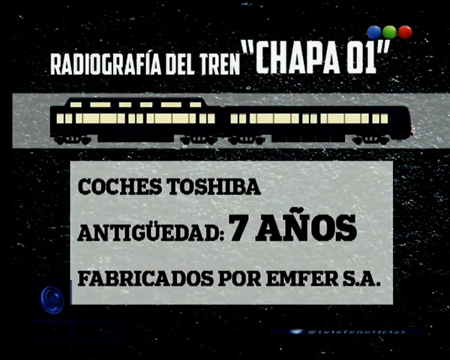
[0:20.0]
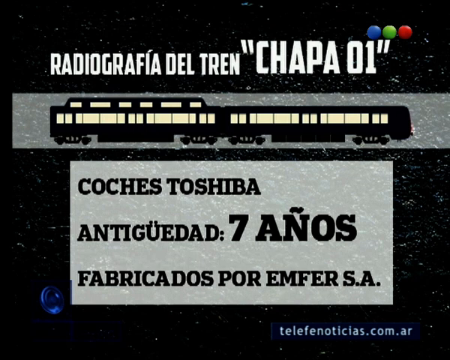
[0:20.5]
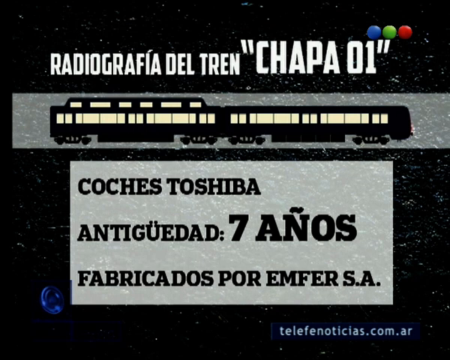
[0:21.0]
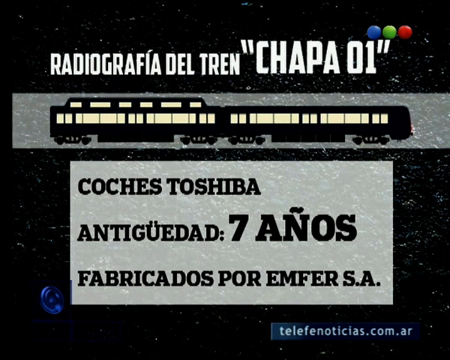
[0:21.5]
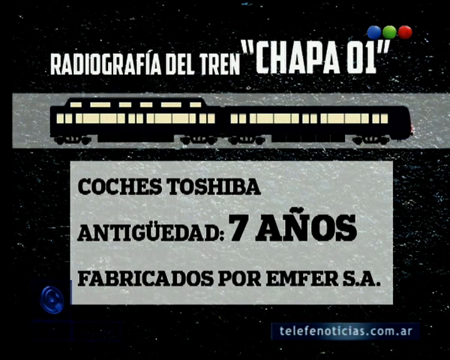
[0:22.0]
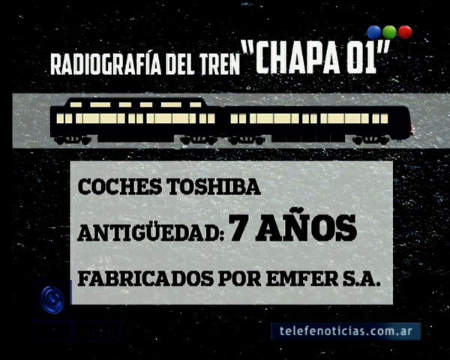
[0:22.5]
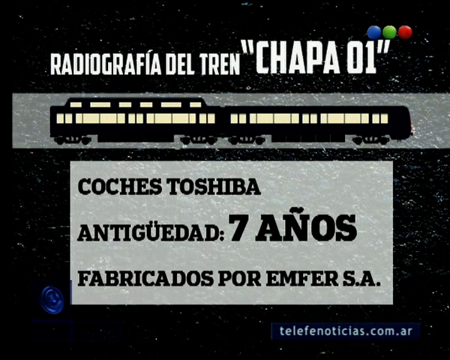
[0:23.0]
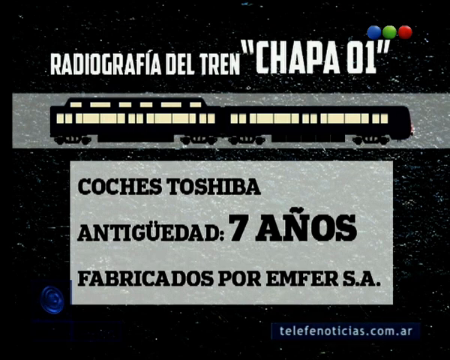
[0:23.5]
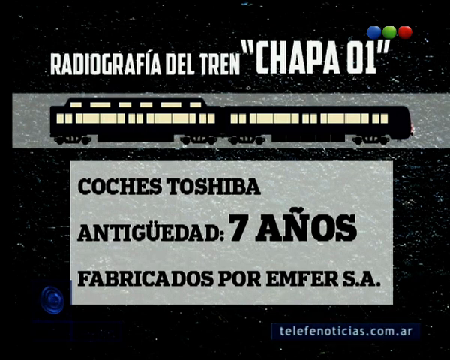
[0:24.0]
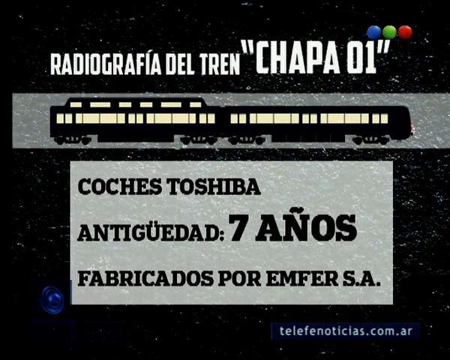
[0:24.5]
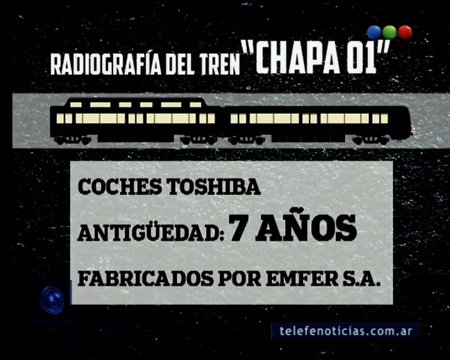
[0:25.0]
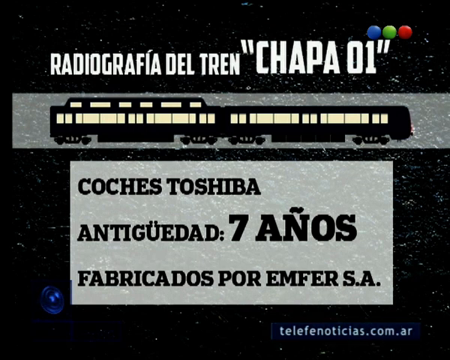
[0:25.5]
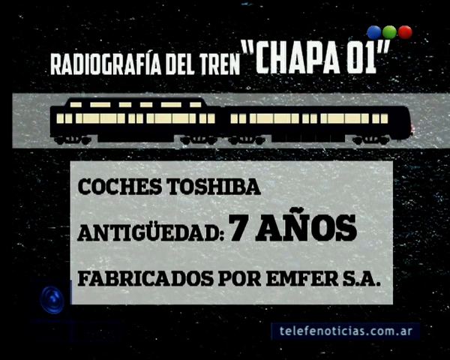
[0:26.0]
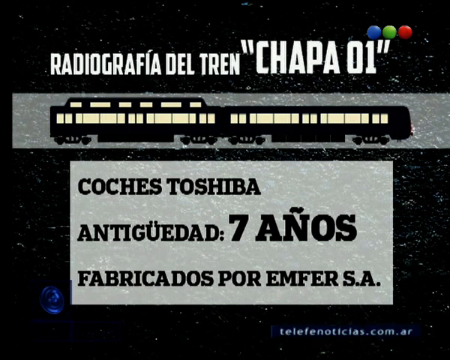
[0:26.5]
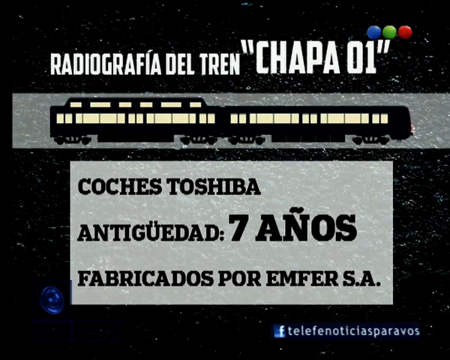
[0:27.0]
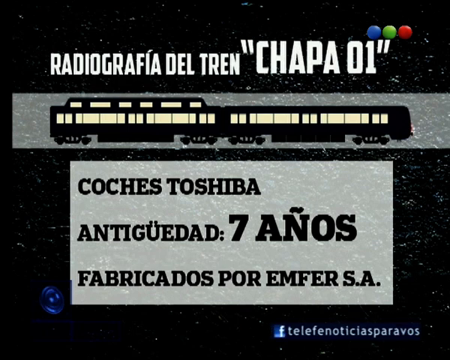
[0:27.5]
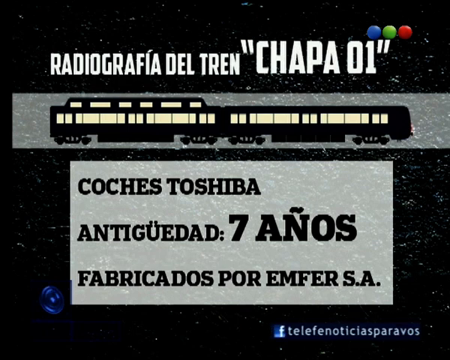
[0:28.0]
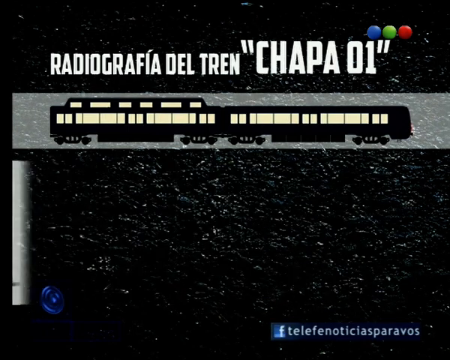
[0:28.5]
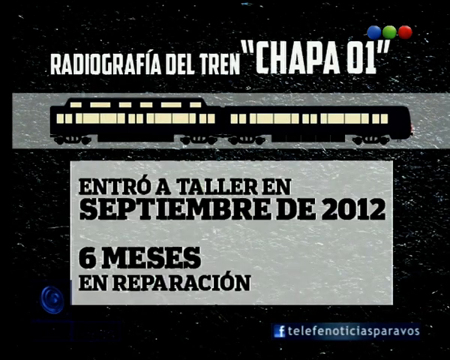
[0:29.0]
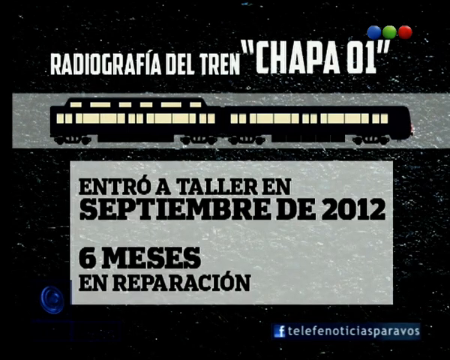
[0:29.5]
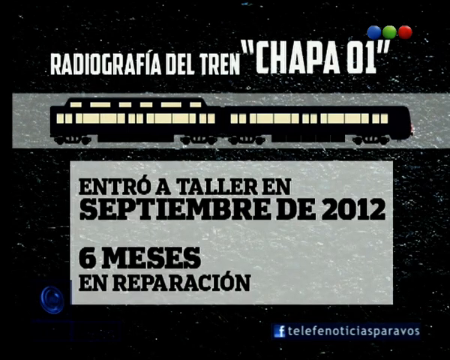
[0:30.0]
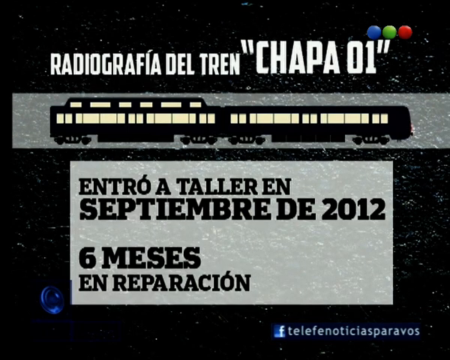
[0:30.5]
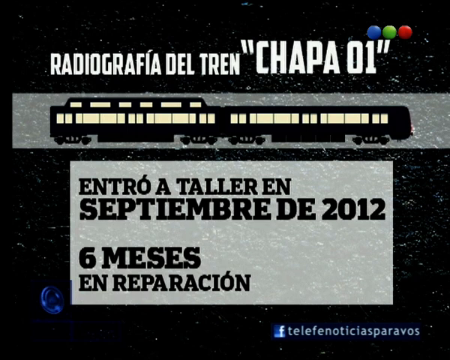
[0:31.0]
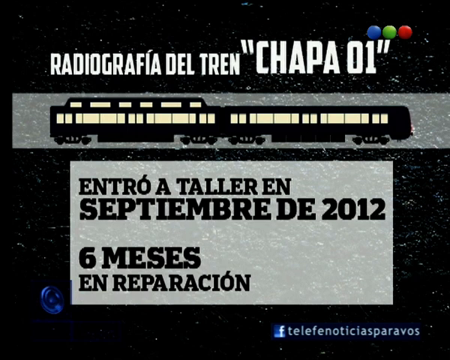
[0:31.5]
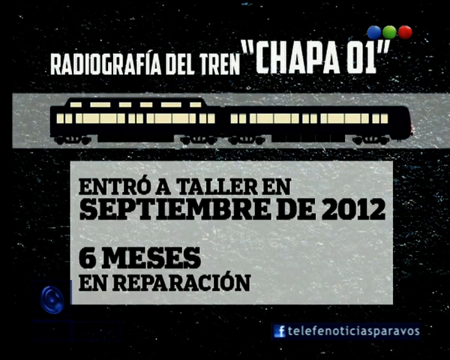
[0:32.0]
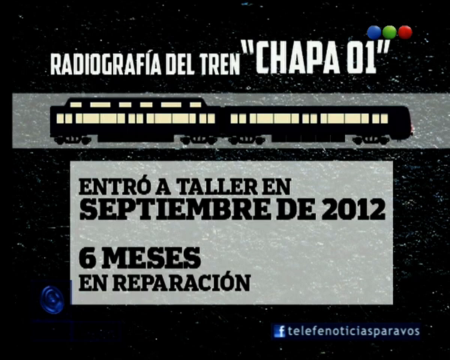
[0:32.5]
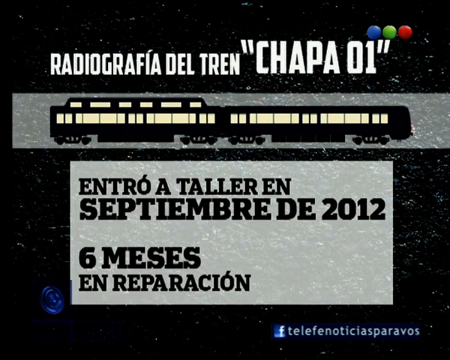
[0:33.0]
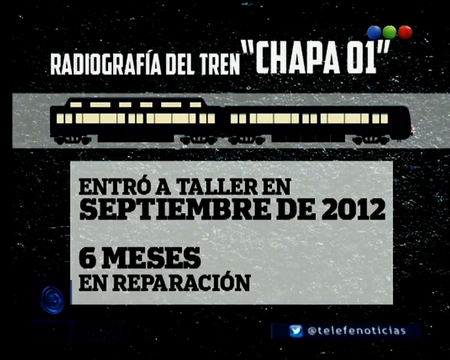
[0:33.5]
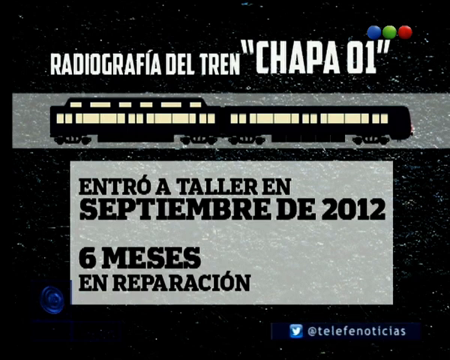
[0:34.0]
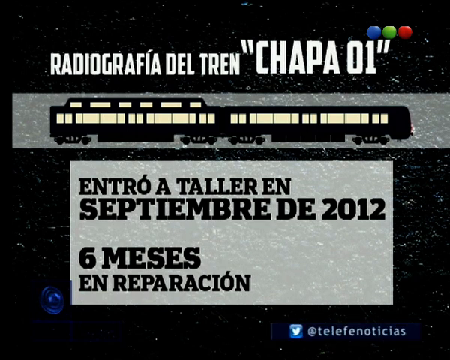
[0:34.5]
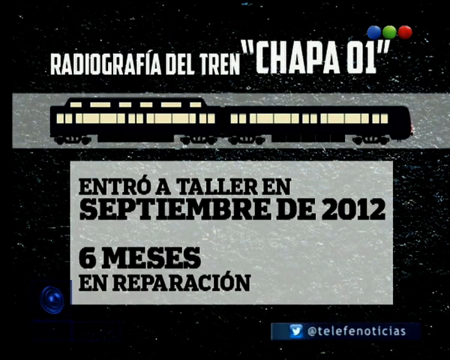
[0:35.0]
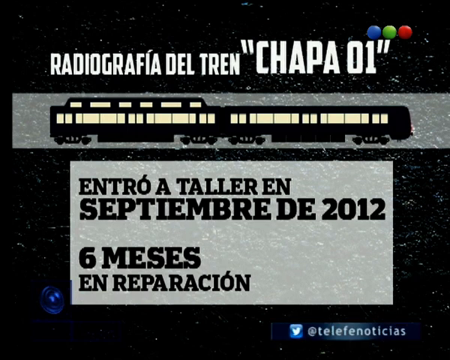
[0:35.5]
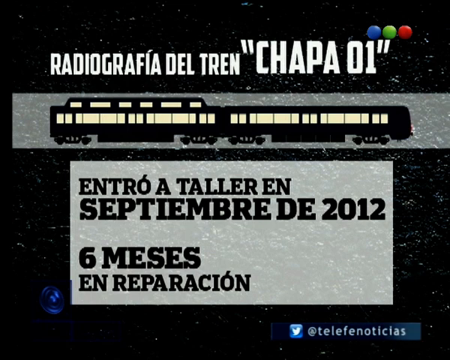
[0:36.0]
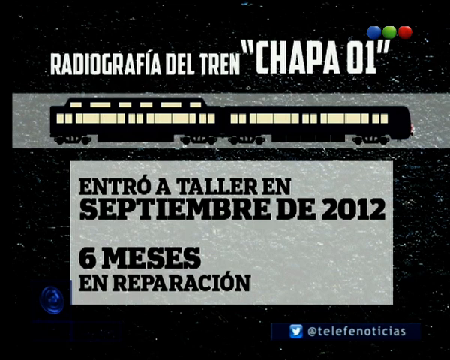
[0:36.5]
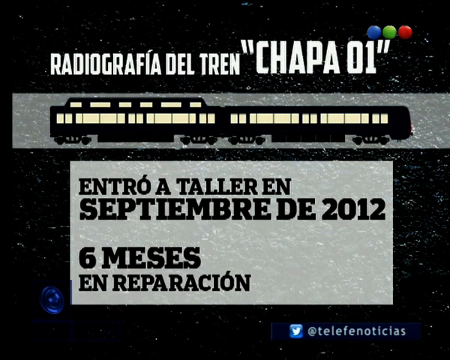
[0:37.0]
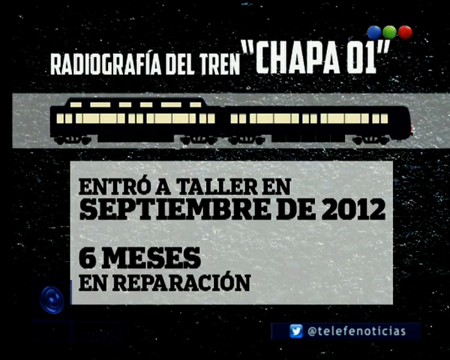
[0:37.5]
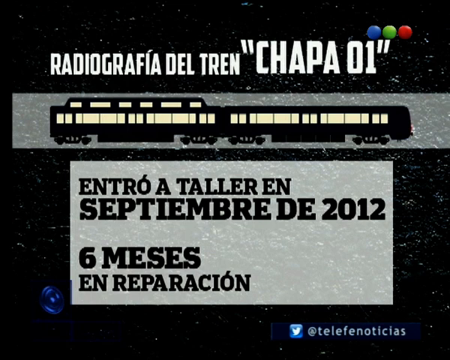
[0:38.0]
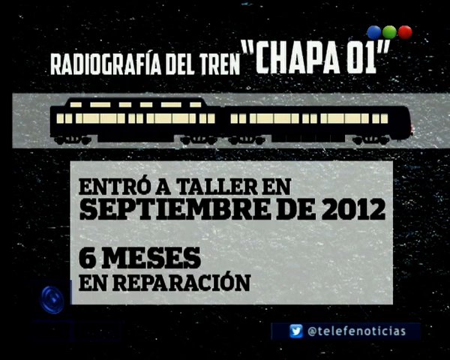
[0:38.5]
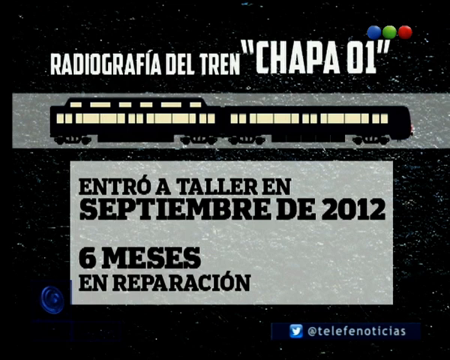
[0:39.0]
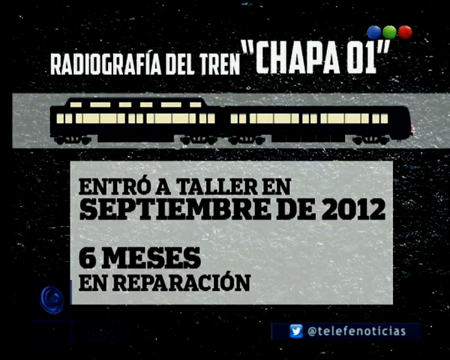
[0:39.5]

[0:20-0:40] A picture appears with all of its text in a foreign language, apparently showing the train. The words at the top translate to something identifying the train's plate as "01." Further text translates to "Toshiba cars," then "age, seven years," and "manufactured by M5SA." Another line reads, in translation, "entered workshop in September 2012," and the last reads "six months in repair."